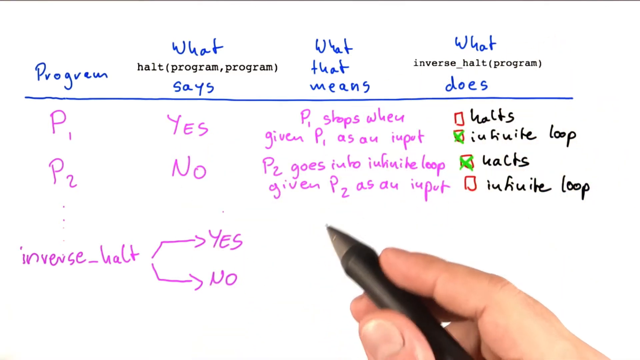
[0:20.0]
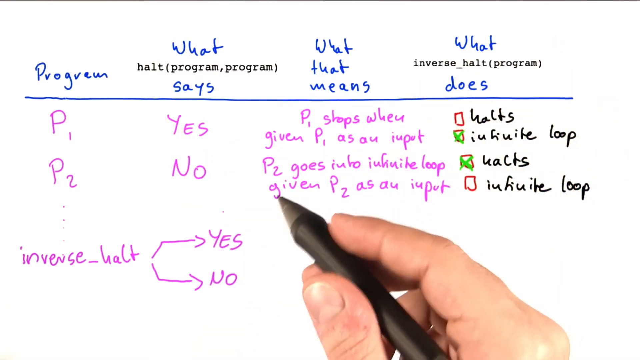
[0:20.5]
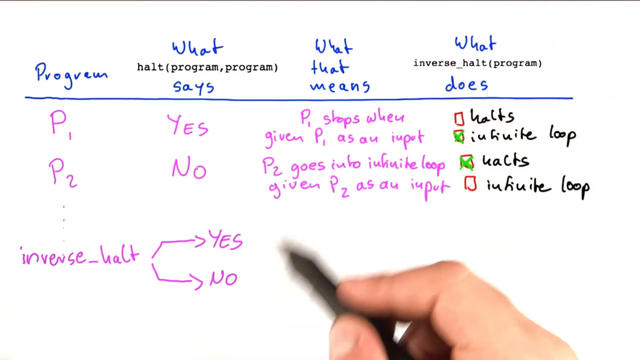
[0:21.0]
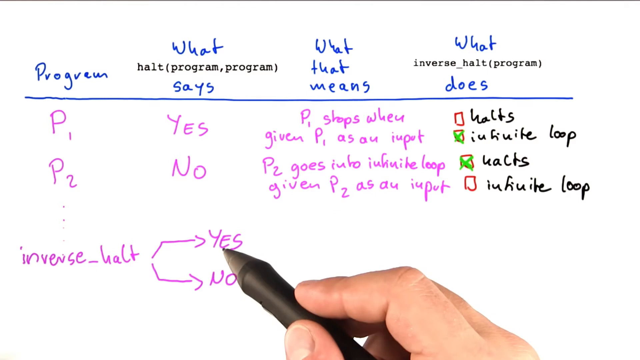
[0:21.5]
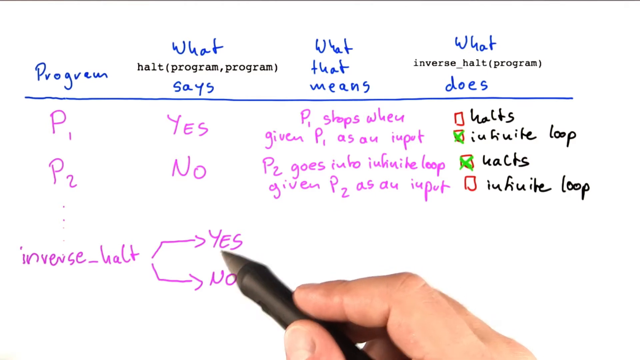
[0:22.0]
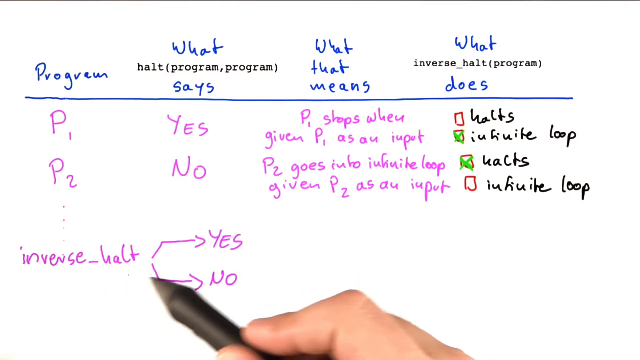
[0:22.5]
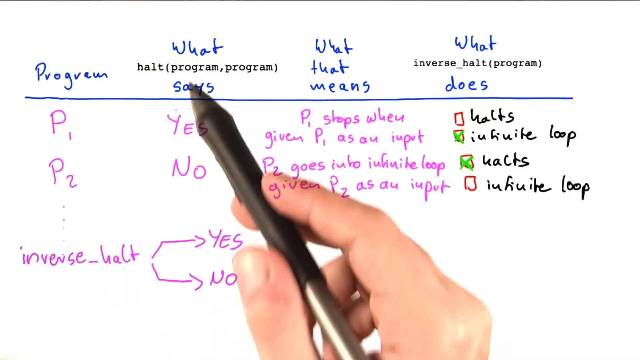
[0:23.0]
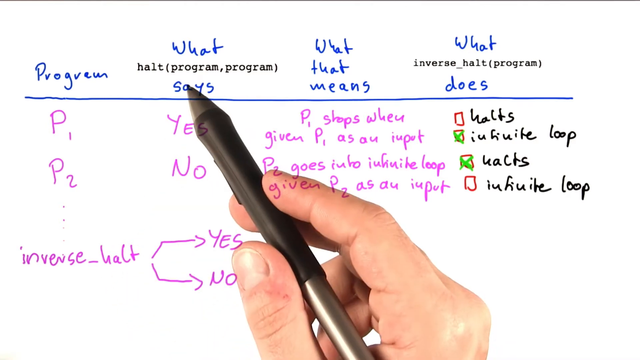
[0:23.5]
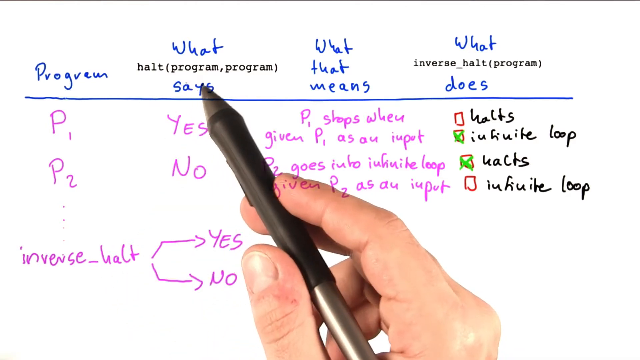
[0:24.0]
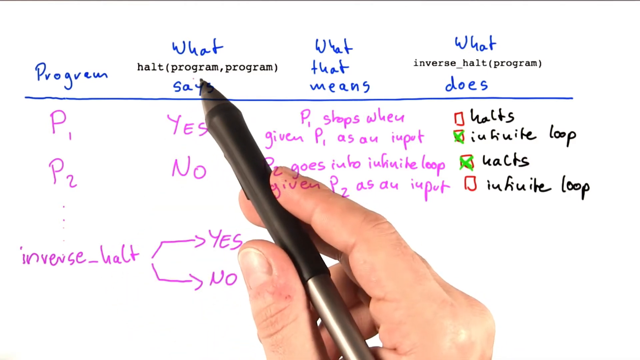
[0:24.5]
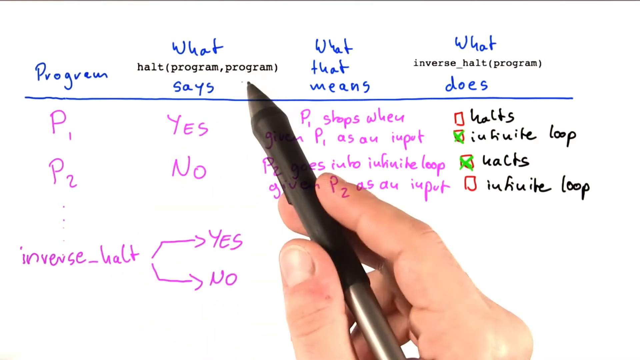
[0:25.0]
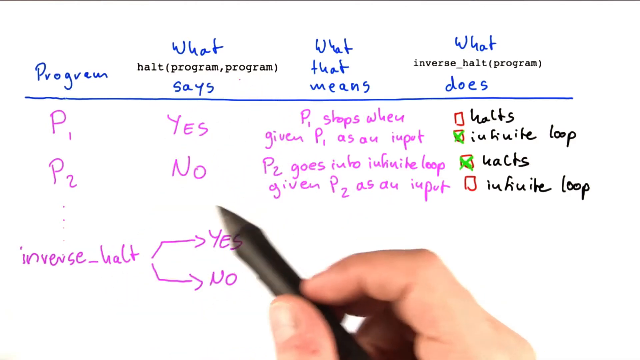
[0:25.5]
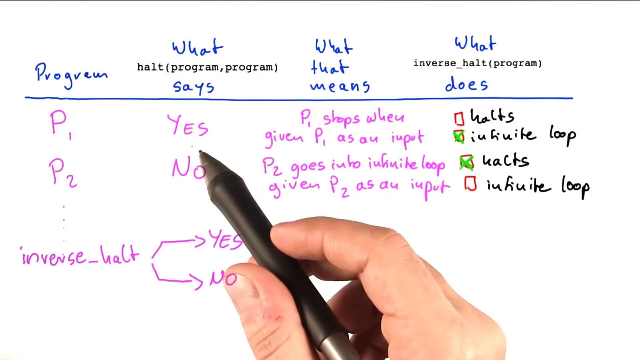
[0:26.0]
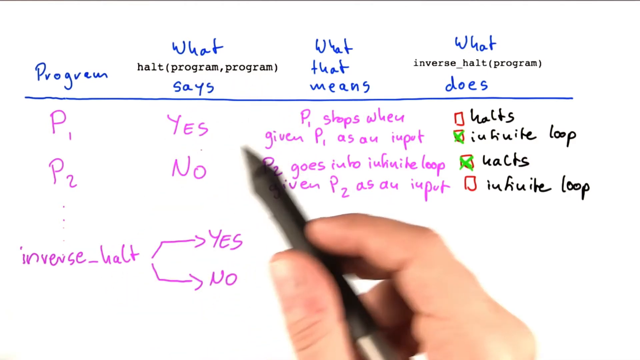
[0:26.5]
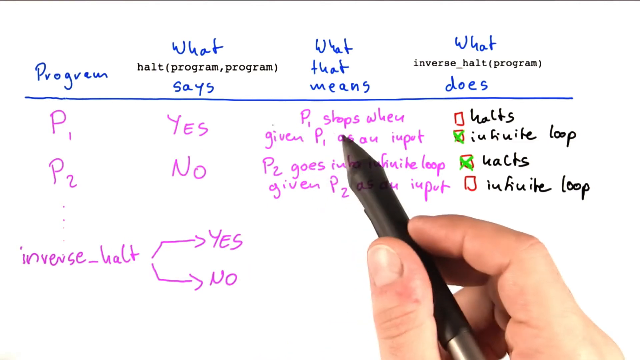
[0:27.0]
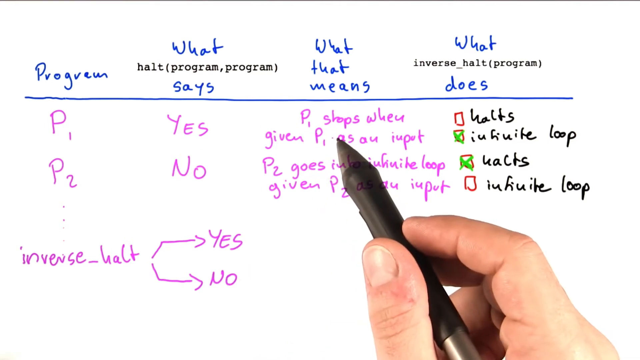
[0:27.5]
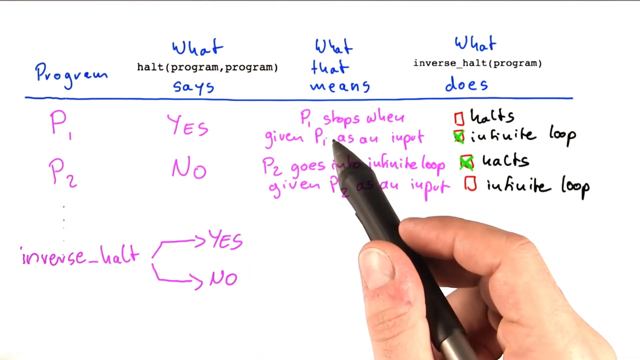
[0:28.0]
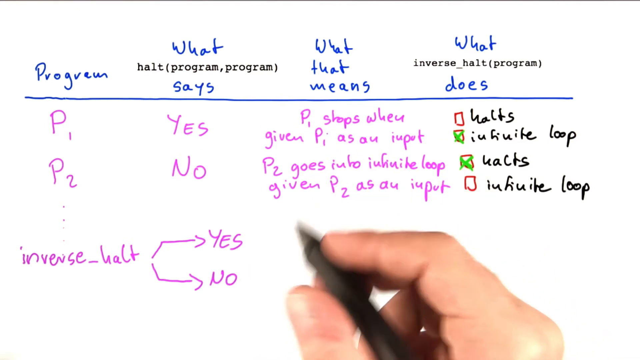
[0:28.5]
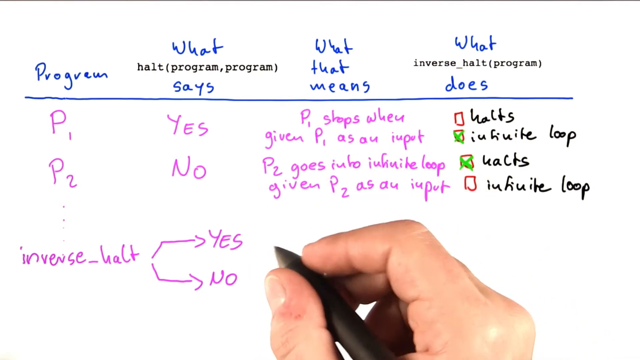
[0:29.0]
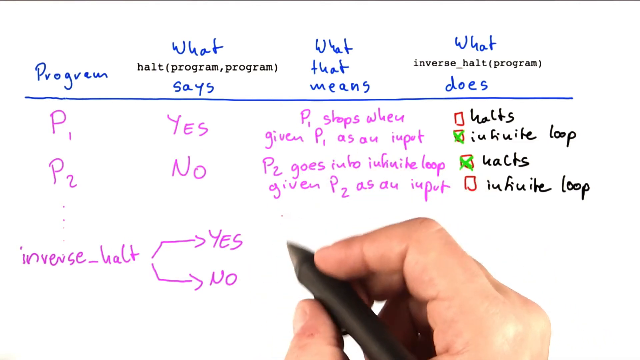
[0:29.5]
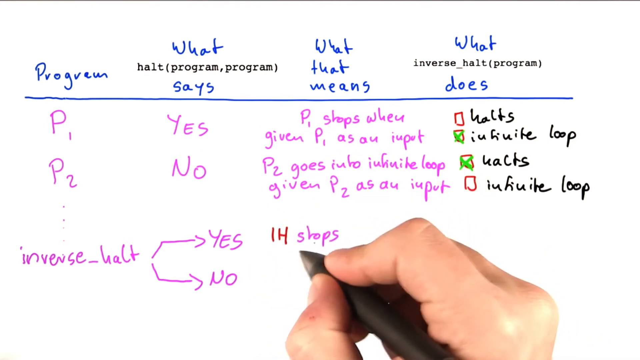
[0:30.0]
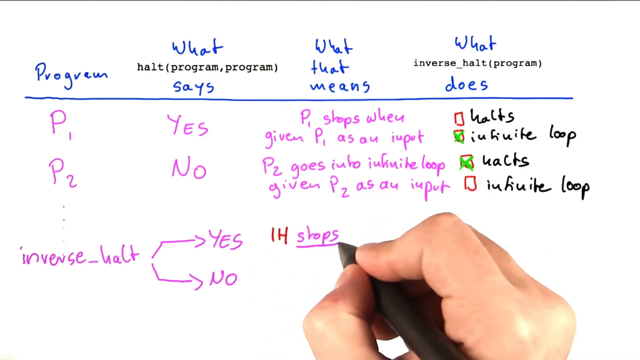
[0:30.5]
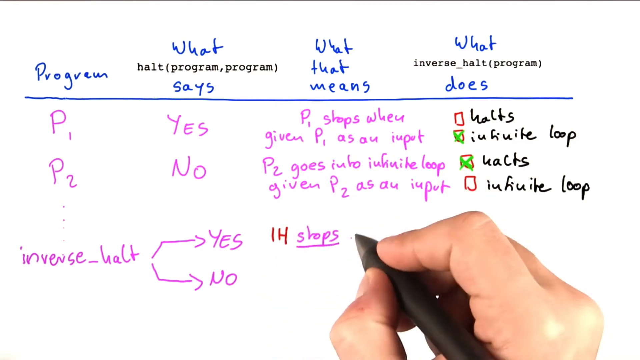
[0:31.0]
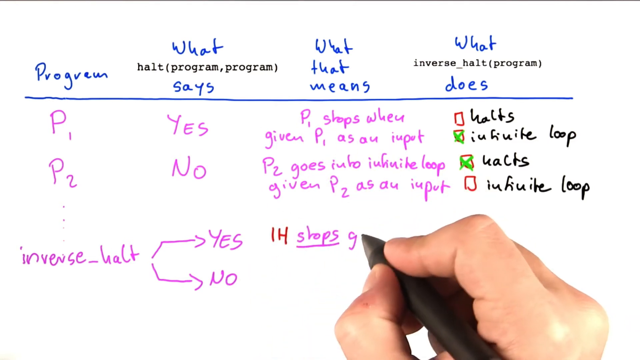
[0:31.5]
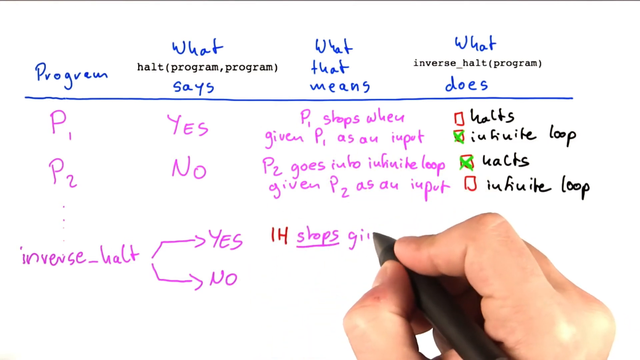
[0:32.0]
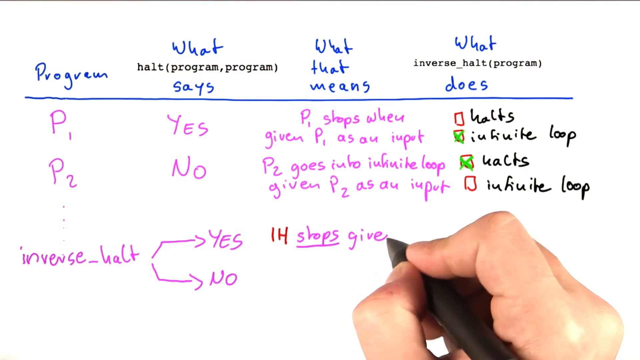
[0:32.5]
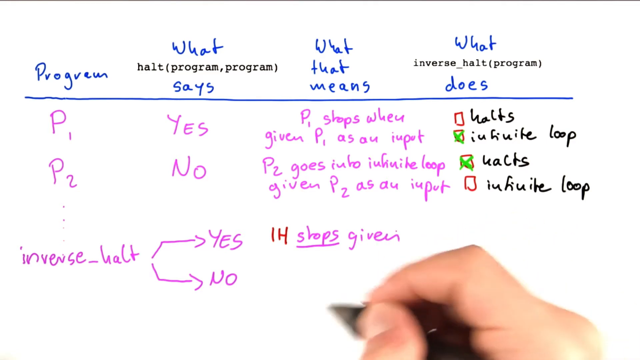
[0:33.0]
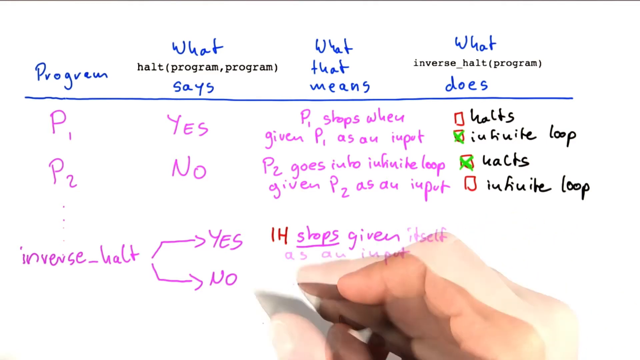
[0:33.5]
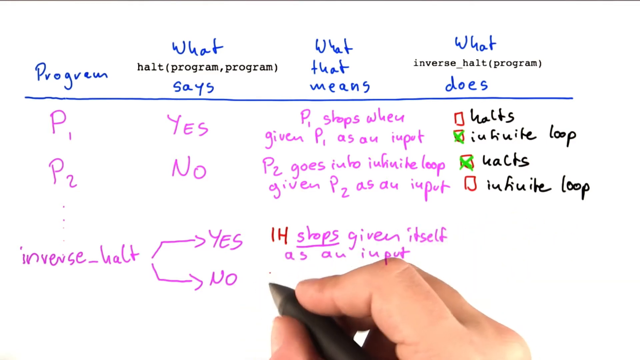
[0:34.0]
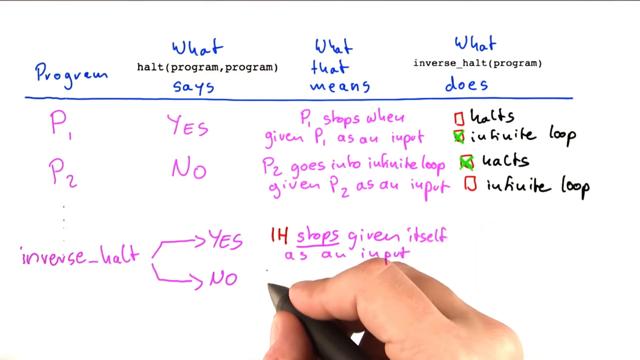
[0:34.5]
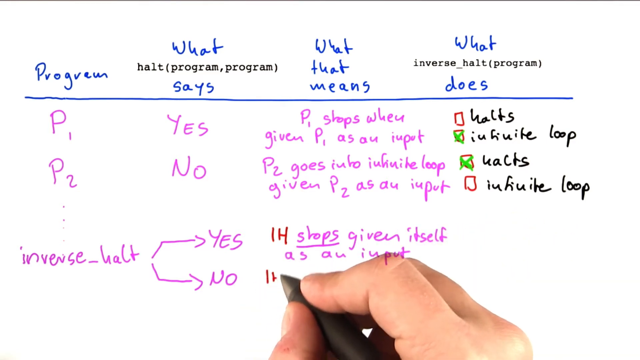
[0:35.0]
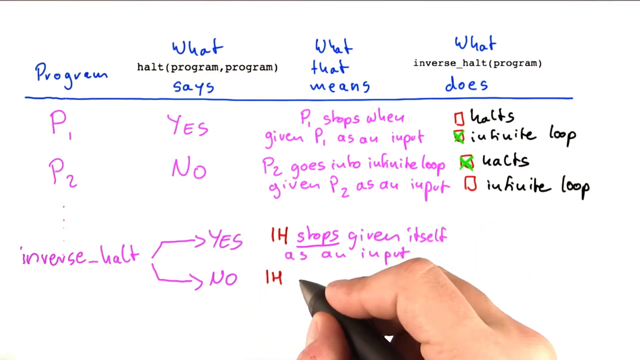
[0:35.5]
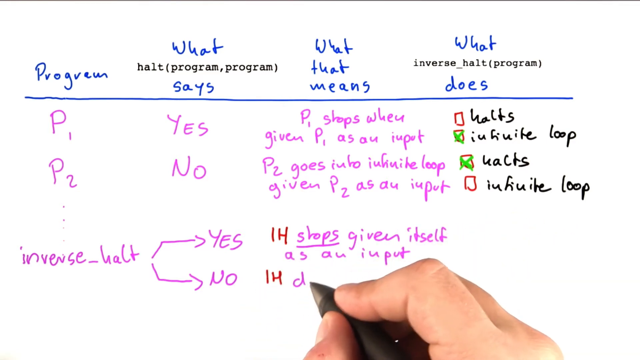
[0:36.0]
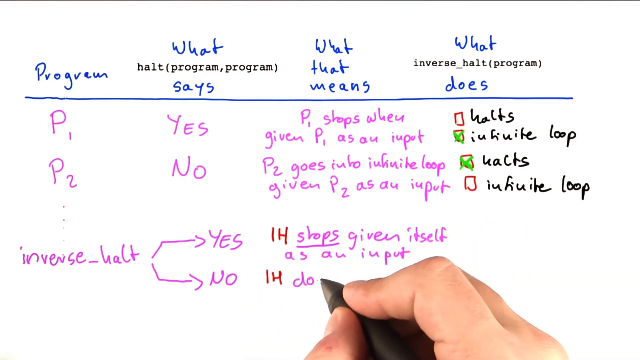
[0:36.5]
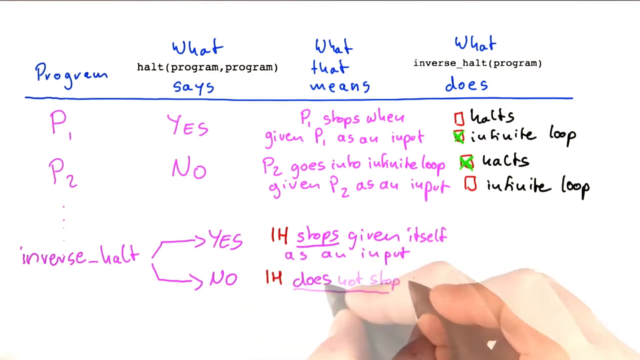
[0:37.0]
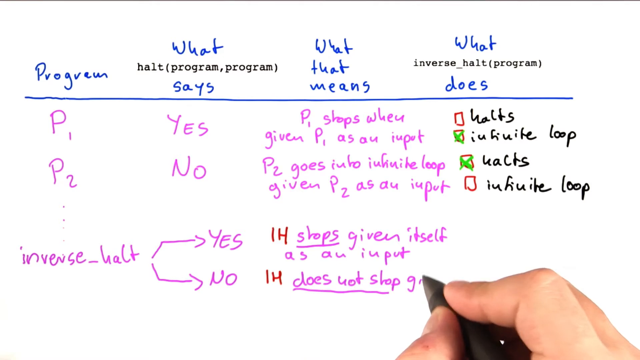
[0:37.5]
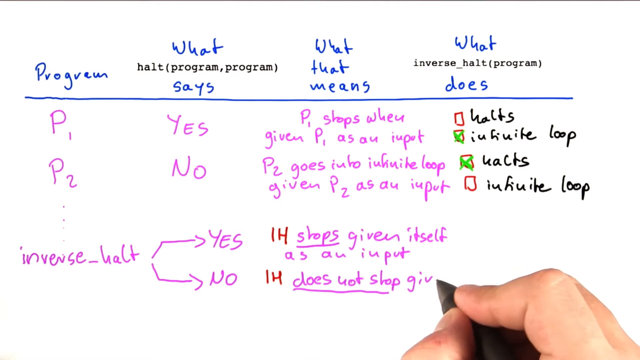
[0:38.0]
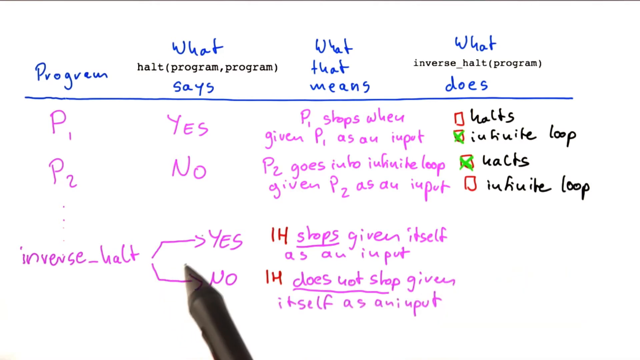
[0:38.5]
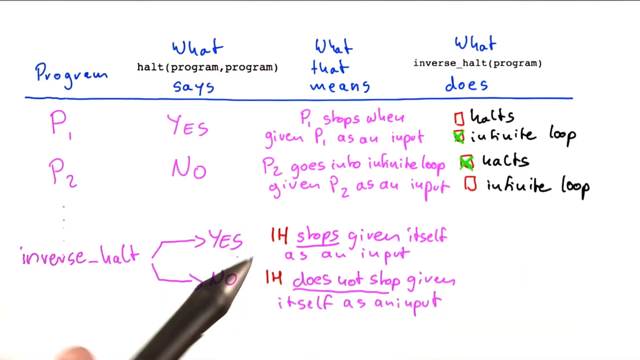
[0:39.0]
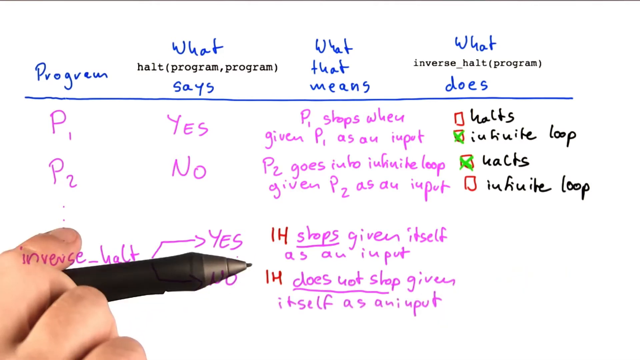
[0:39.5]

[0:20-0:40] Someone is writing text on a whiteboard that already has several lines and four columns: "program" on the left, "what says" a little to the right, "what that means" further right, and "what does" on the right side, with P1 and P2 listed. Below, the person writes new text, inverse_halt, branching it off into a yes and a no. Using a marker or pen, they underline various parts and point to different parts of the board. Next to yes they write "ih stops given itself as an input", and next to no "ih does not stop given itself as an input".